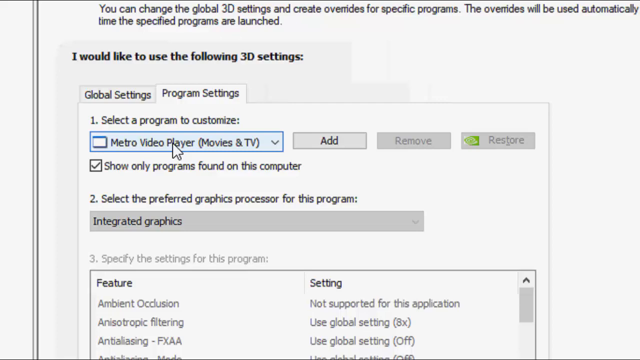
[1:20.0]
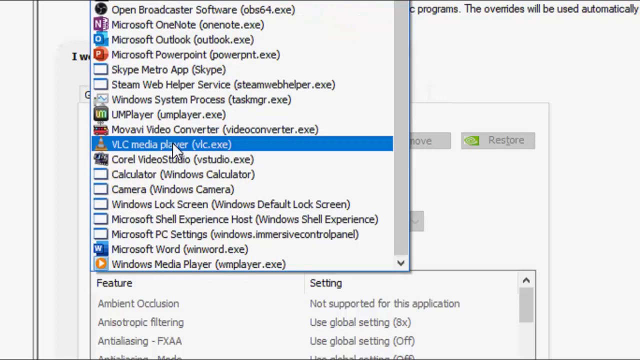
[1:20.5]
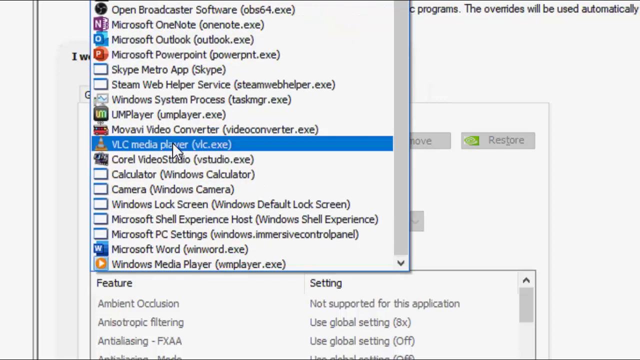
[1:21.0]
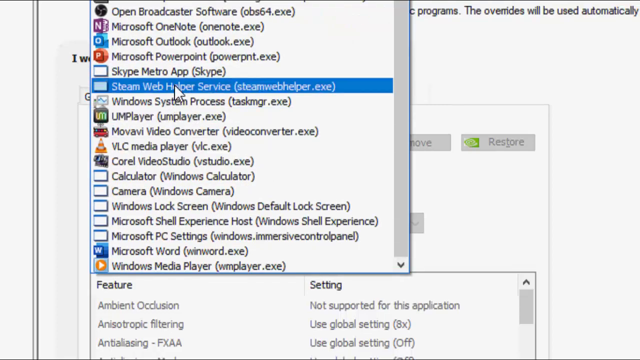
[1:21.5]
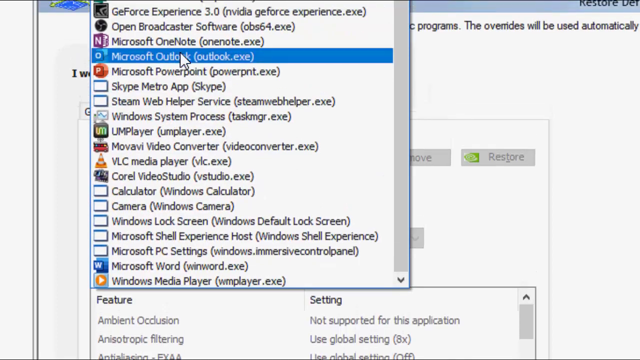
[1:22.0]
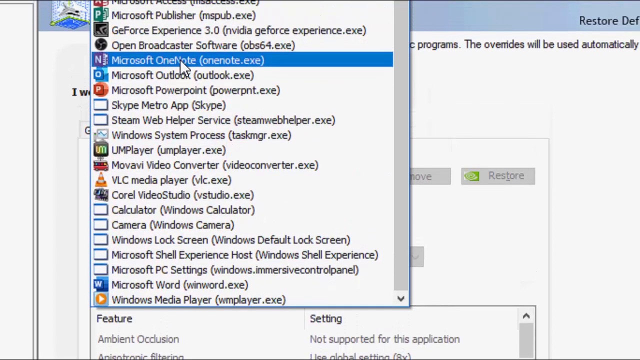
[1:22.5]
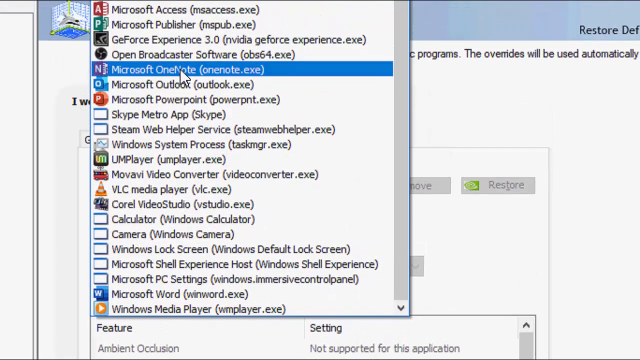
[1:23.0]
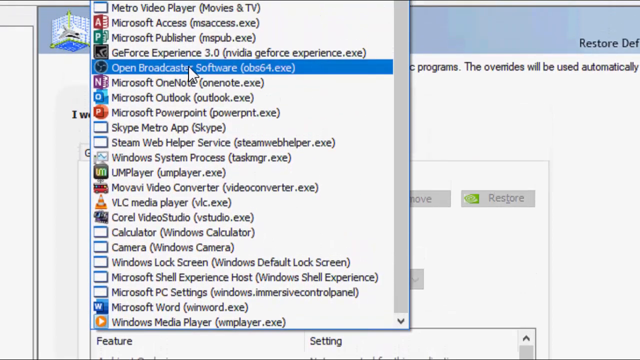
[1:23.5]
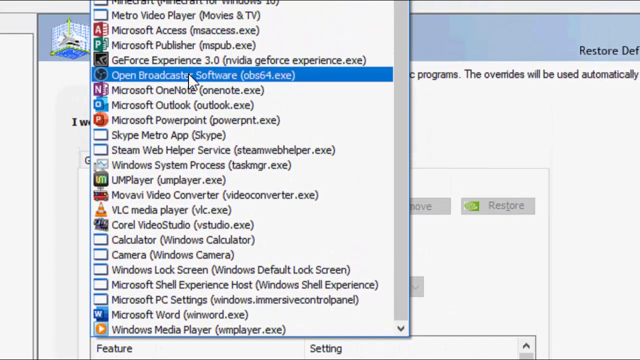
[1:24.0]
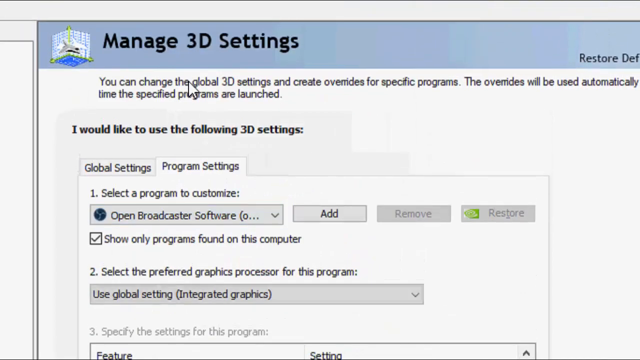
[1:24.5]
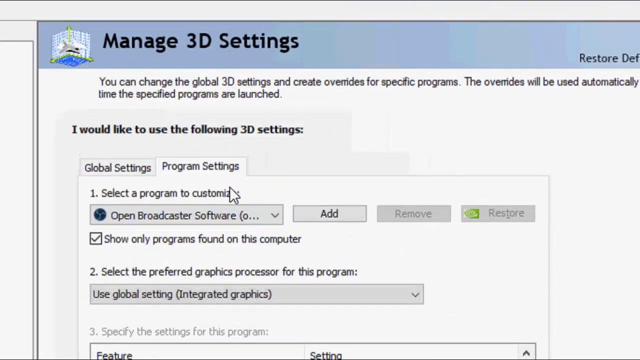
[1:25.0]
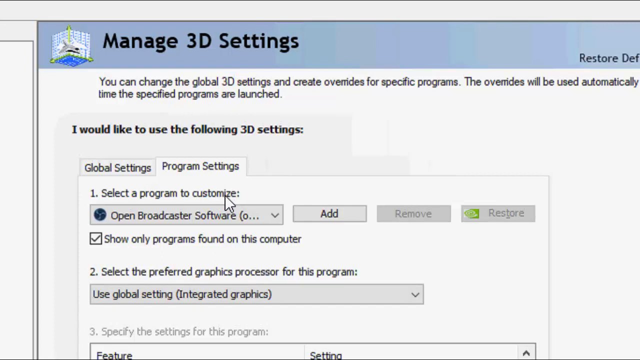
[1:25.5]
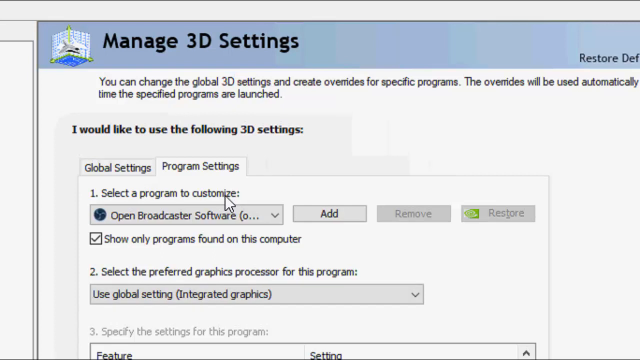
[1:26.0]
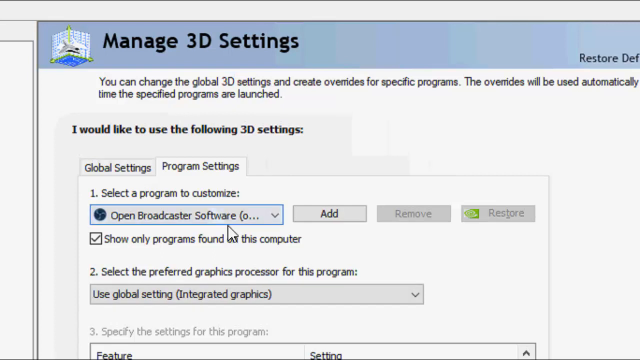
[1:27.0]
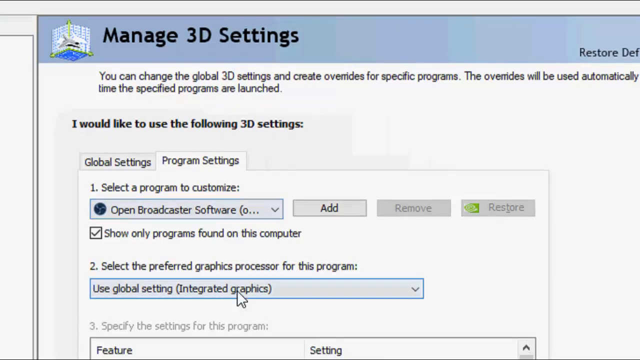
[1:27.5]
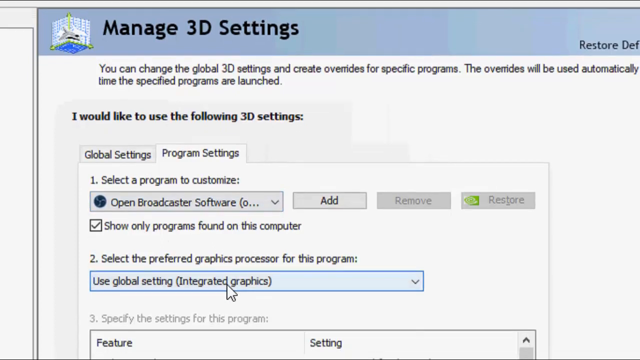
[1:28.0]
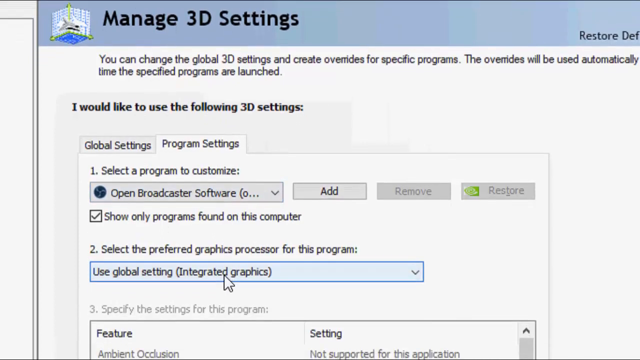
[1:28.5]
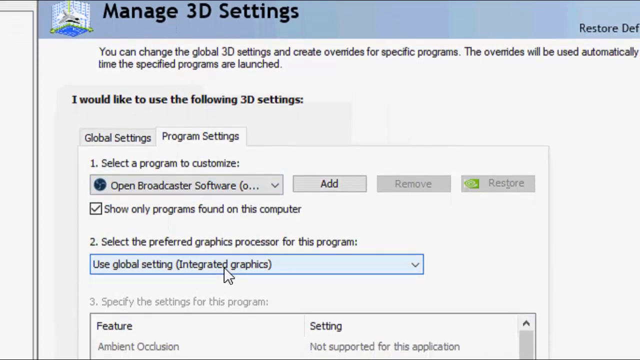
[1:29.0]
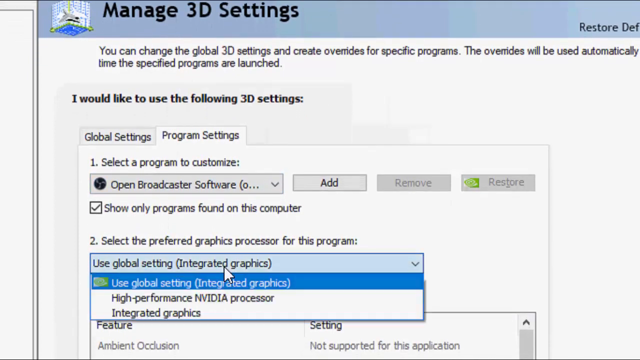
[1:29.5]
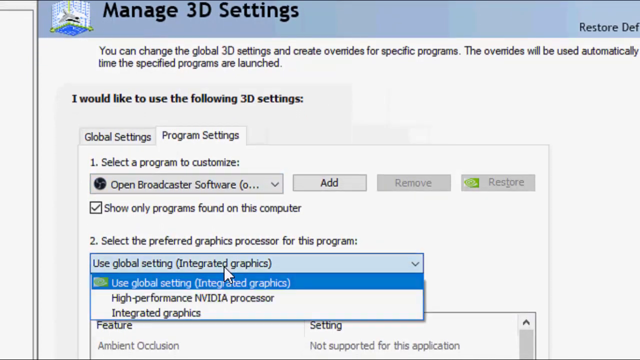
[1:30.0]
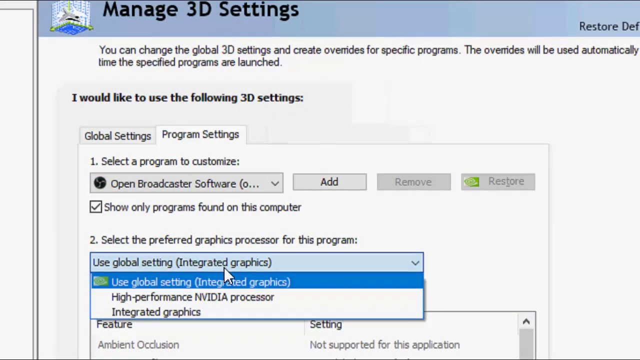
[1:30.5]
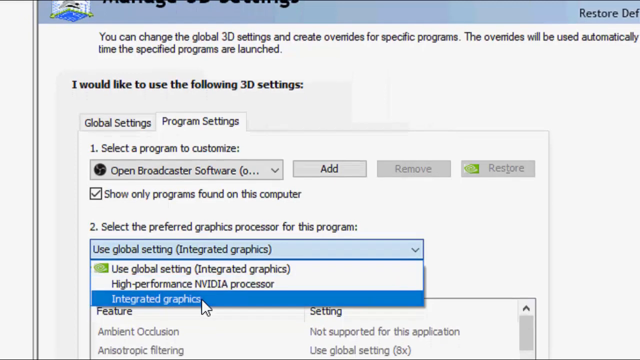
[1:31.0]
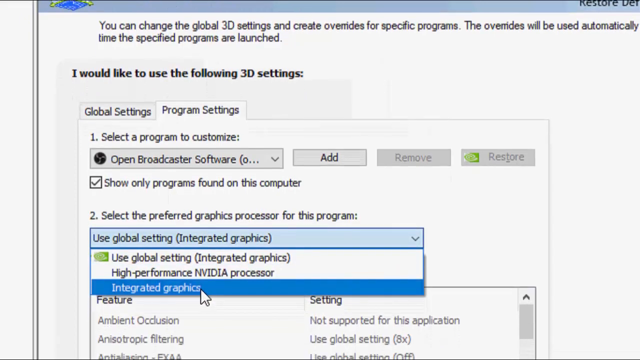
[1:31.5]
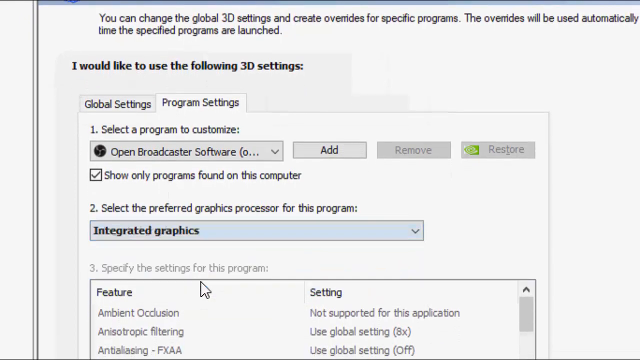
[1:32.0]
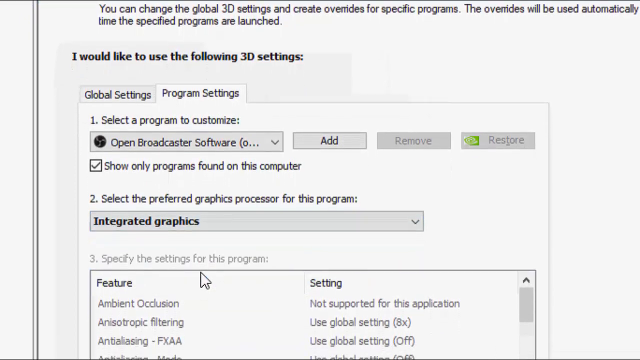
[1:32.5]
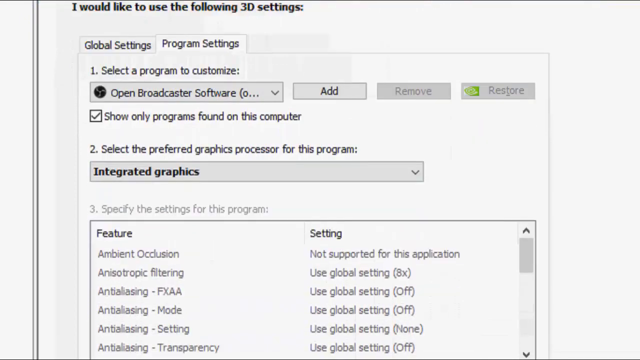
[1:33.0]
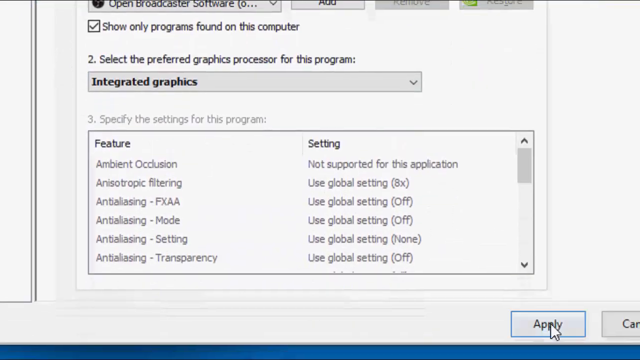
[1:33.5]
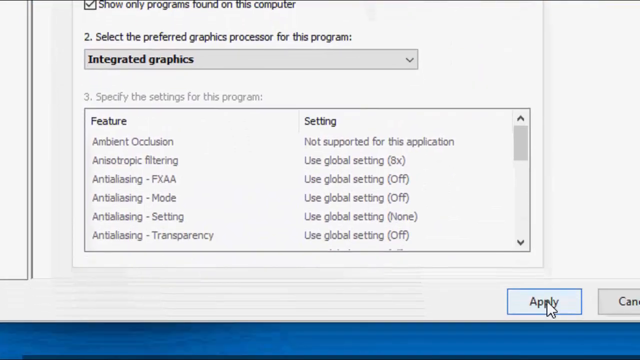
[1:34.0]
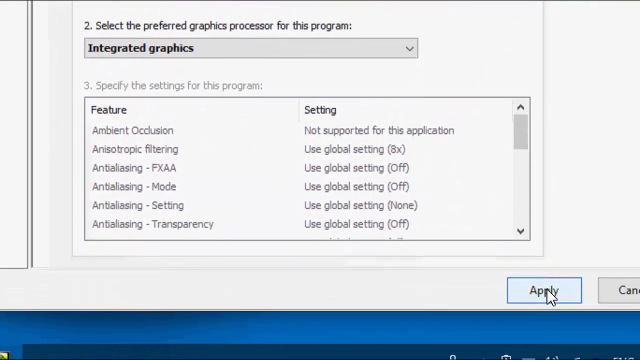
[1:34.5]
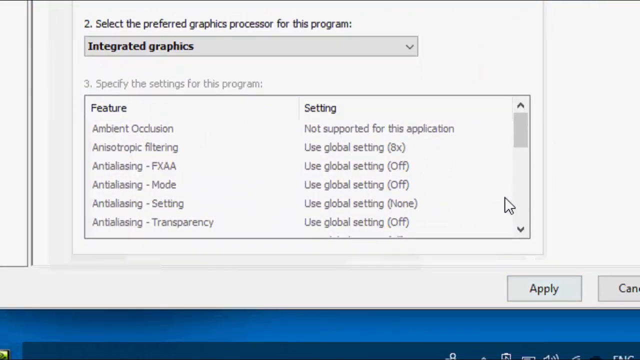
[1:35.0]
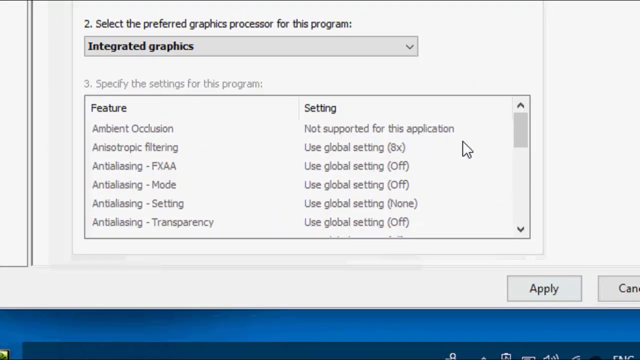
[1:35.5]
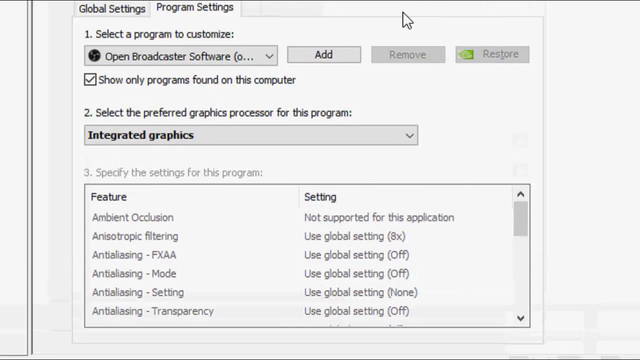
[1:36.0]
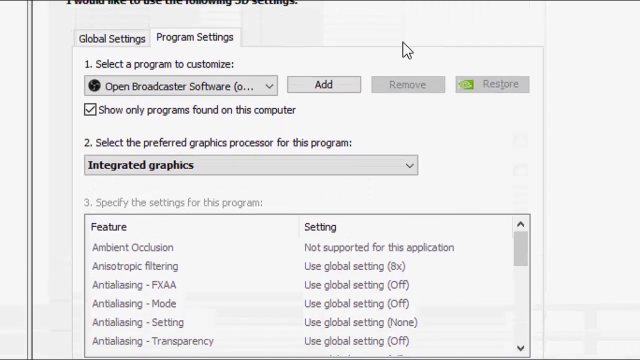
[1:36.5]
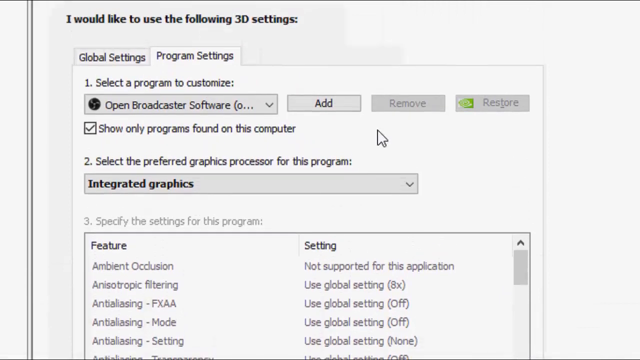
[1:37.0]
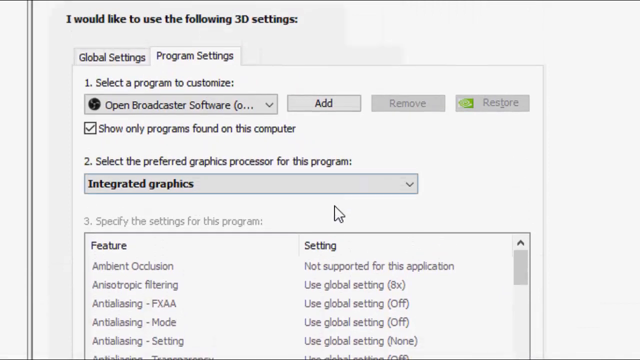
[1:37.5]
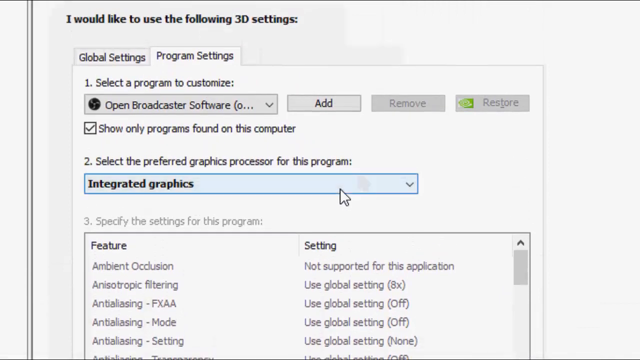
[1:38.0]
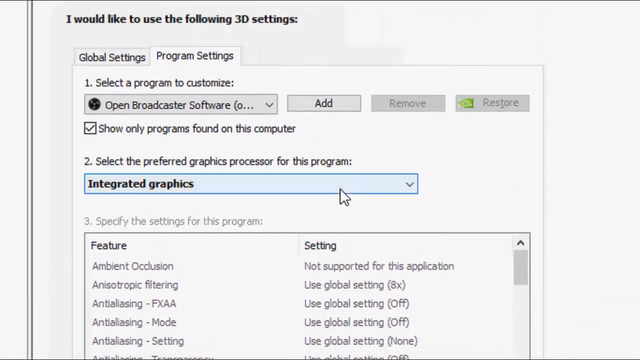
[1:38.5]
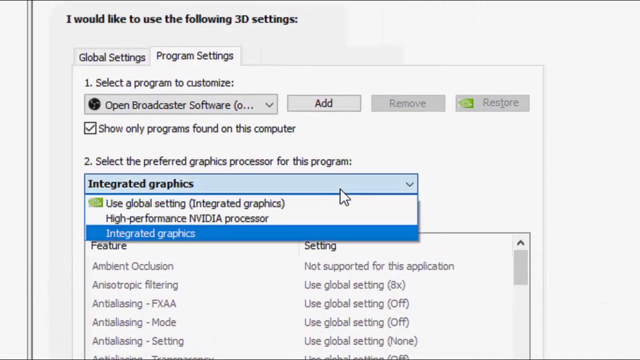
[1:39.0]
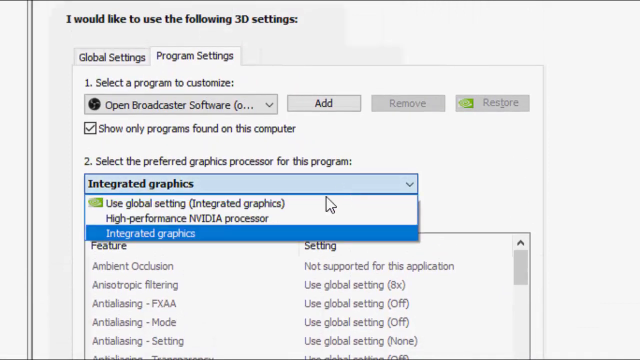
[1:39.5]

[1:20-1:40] The person stays on the Program Settings of the Manage 3D Settings page in the NVIDIA Control Panel. It reads "1. Select a program to customize", currently set to Metro video player, movies and TV, with "Add", "Remove" and "Restore" to the right. Below is a checked box reading "Show only programs found on this computer". Next is "2. Select the preferred graphics processor for this program" with "Integrated graphics" below it, then "3. Specify the settings for this program" with a box below. They click on Metro video player, which opens a large drop-down menu of many programs, such as Microsoft Outlook, Microsoft PowerPoint, Skype, Metro app, VLC media player, Microsoft Word and Microsoft OneNote, and they select Open Broadcaster Software, marked use global.